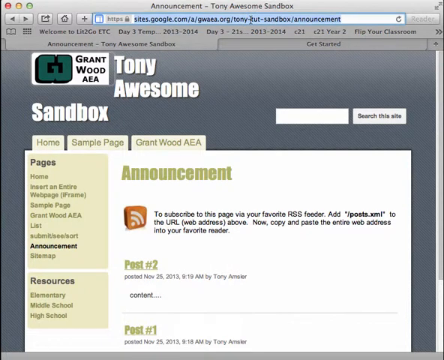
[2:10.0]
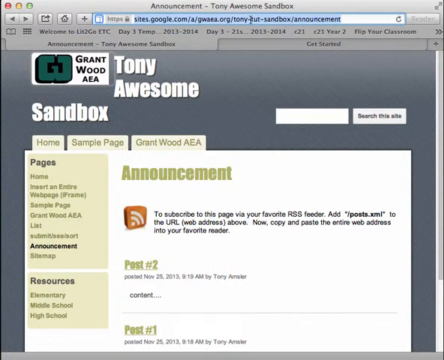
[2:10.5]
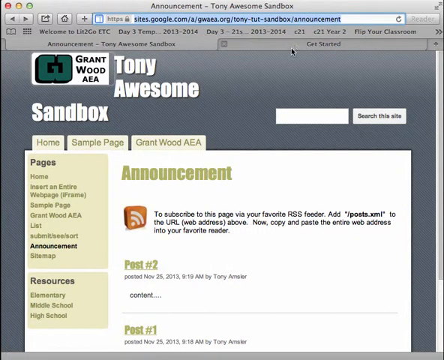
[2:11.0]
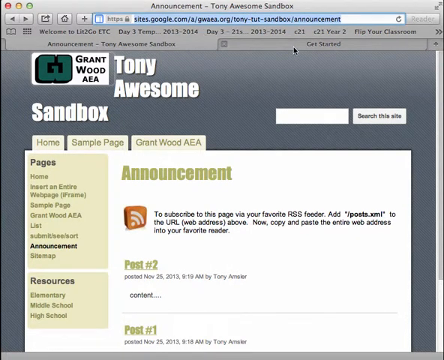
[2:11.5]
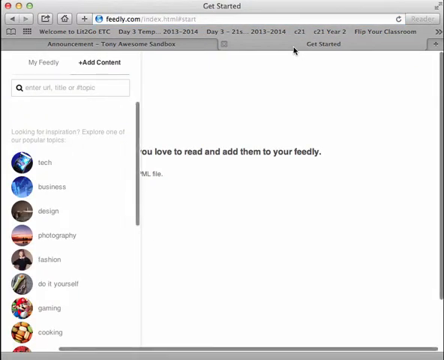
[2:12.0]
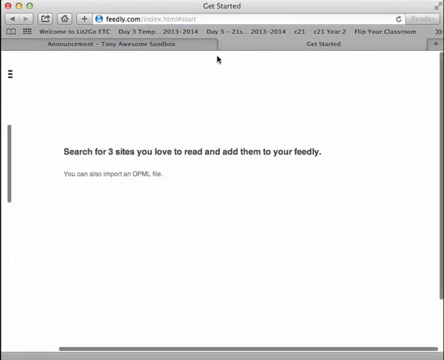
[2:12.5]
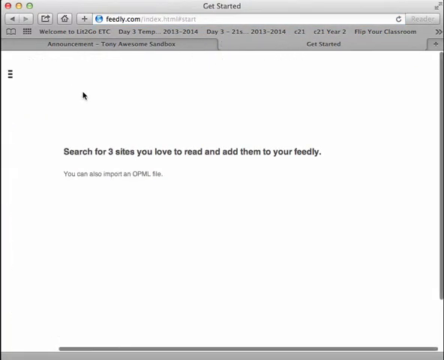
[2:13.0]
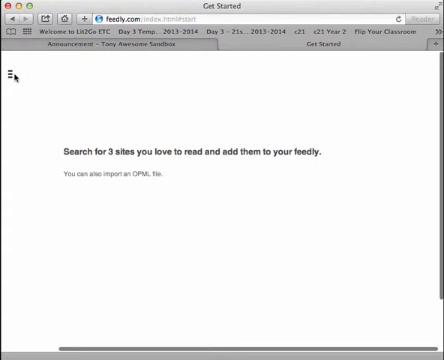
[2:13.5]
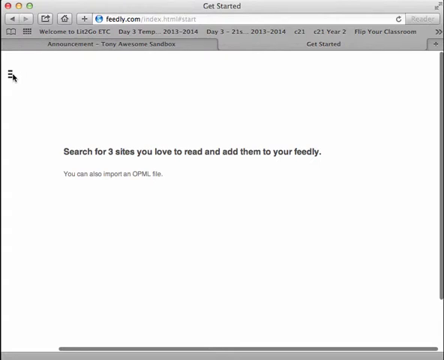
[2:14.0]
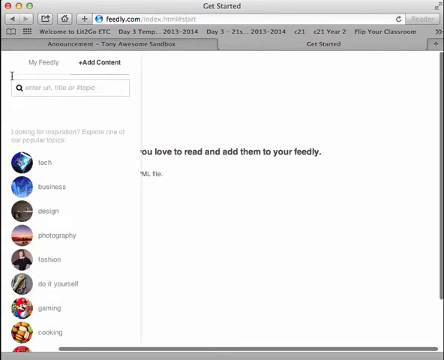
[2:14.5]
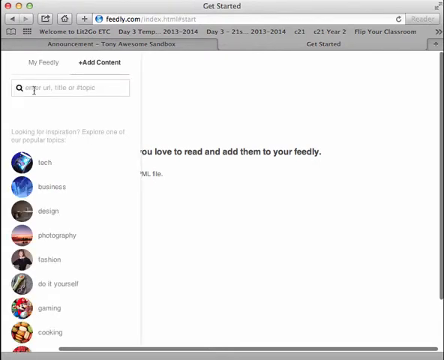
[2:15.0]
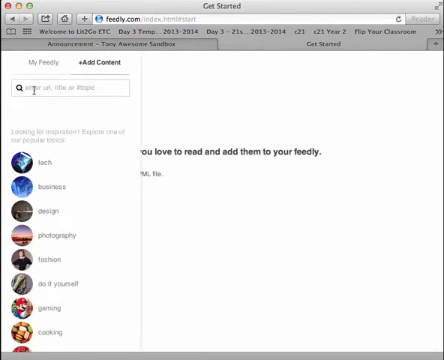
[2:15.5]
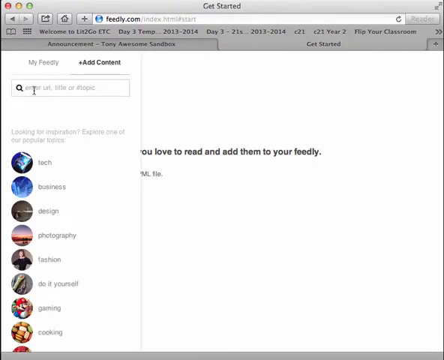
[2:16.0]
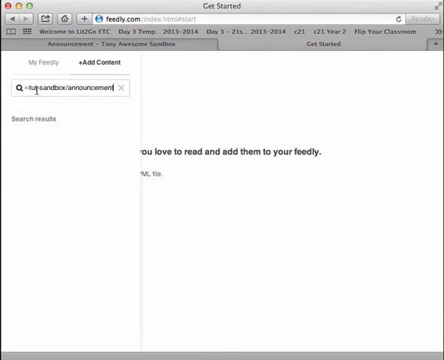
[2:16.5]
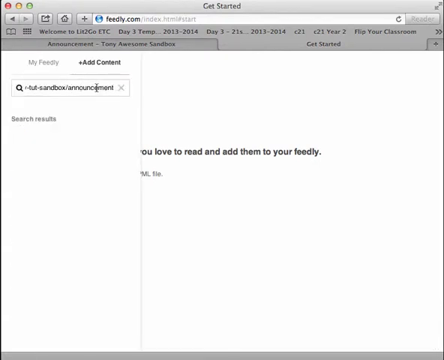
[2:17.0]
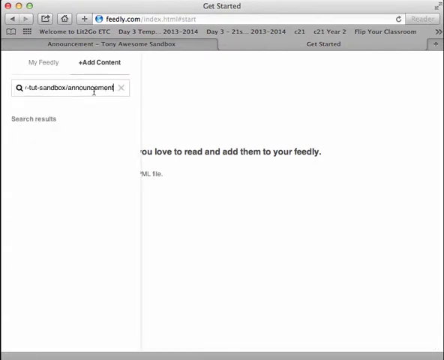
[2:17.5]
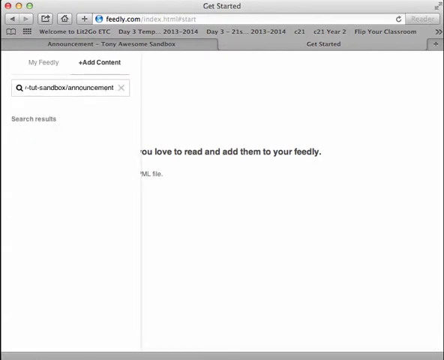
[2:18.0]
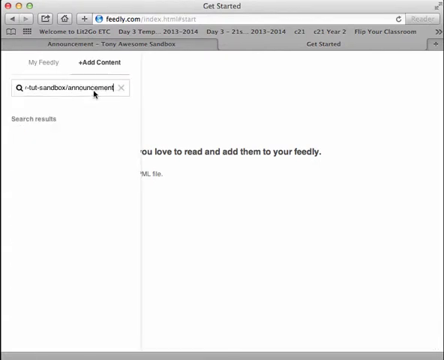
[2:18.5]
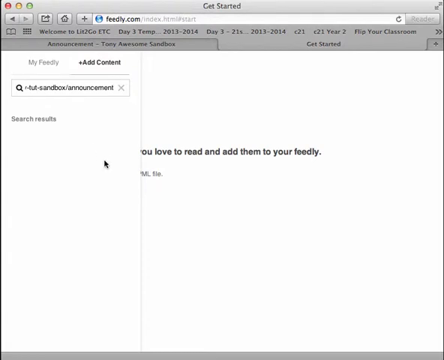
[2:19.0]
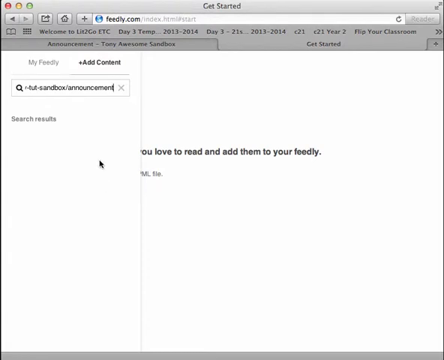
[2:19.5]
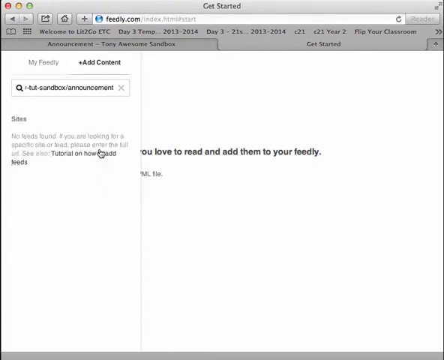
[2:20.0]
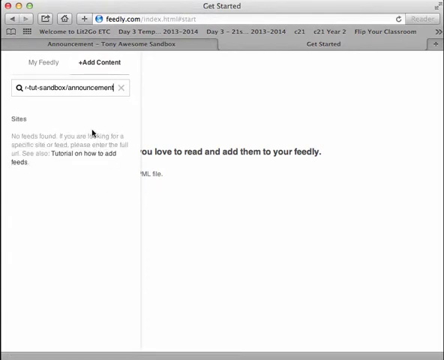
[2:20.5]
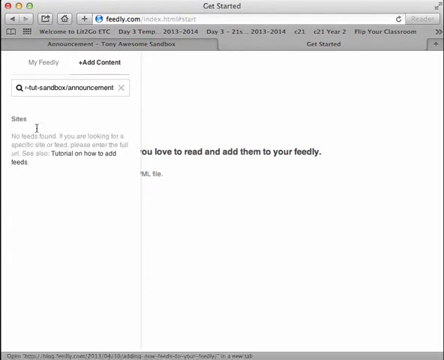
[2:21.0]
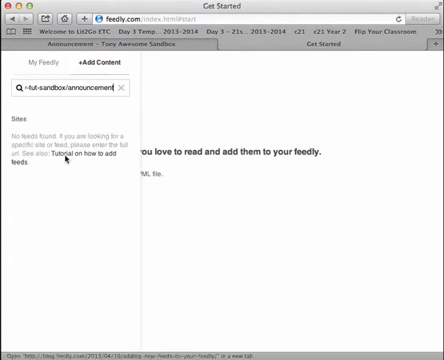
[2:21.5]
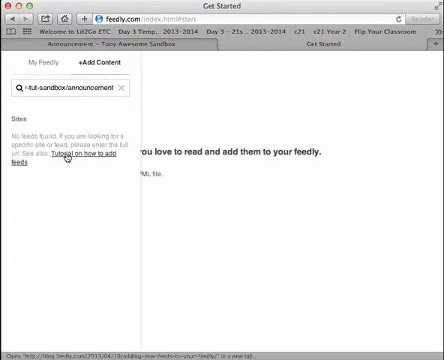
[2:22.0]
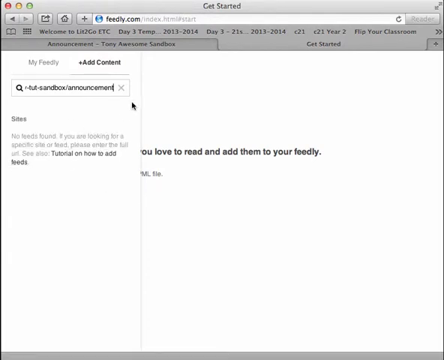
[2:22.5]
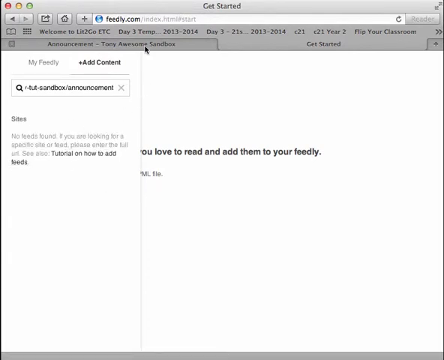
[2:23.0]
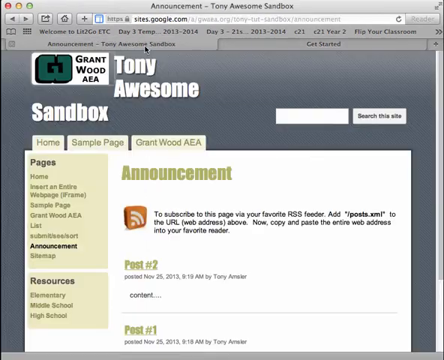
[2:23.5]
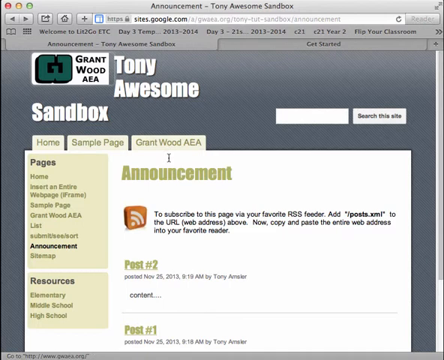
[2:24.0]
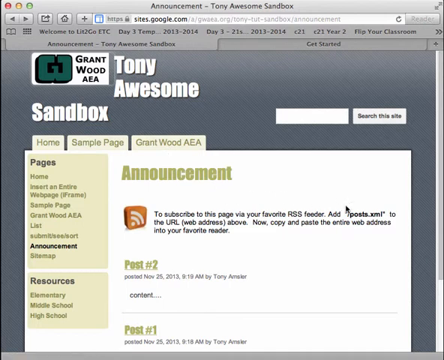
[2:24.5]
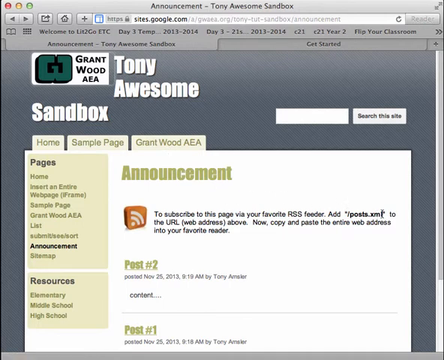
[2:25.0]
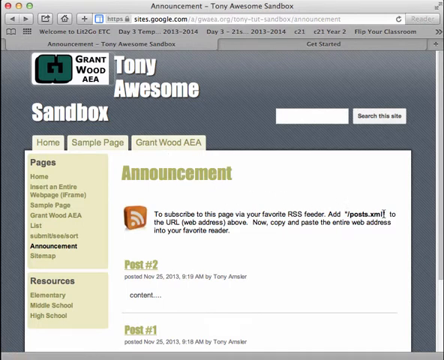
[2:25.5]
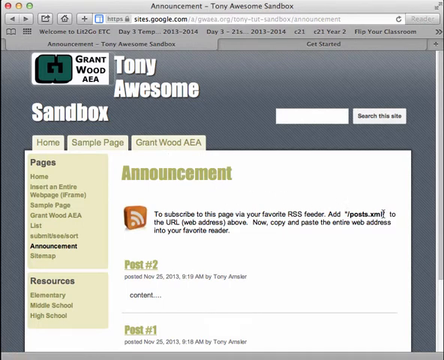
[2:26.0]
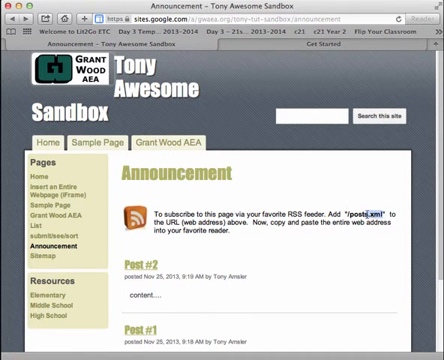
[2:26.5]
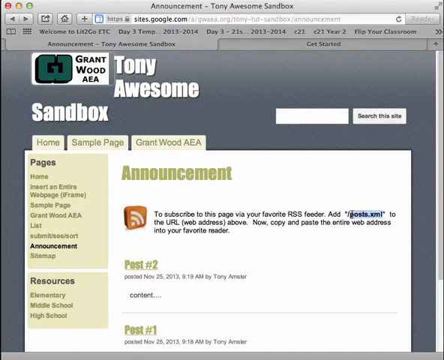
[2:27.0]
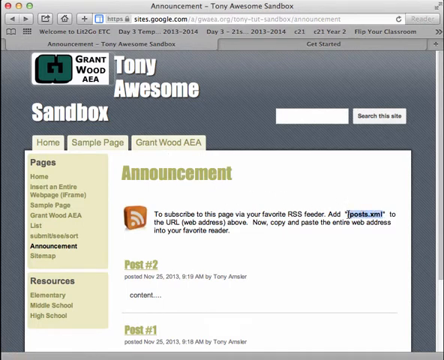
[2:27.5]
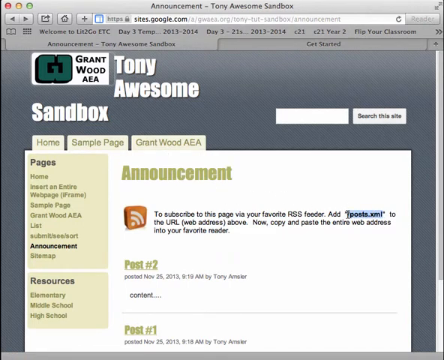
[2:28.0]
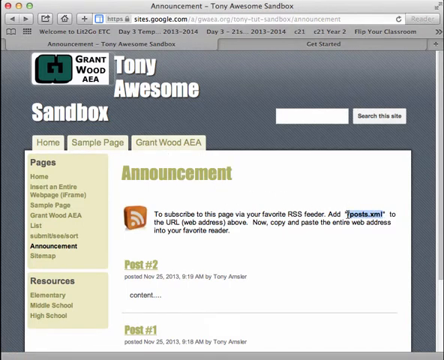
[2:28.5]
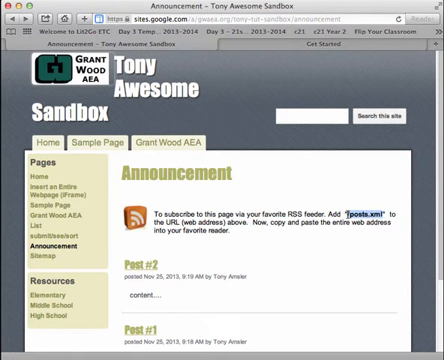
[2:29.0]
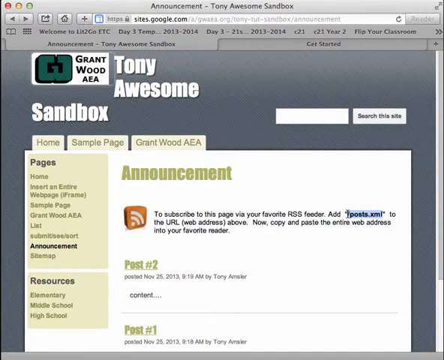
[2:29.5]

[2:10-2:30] There are two tabs near the top: one says "Announcements Tony Awesome Sandbox" and the other says "Get Started." The user clicks on the Get Started tab and then the hamburger icon, pastes the website address into the search bar and hits enter. Under search results, text reads "If you are looking for a specific site or feed, please enter the full URL. See also tutorial on how to add feeds," with "tutorial on how to add feeds" in bold. The user clicks back on Announcement Tony Awesome Sandbox and highlights the website address ending in "/posts.xml." They then click on the website address at the very top of the screen, which is highlighted, apparently in order to add "/posts.xml" to the end of it.